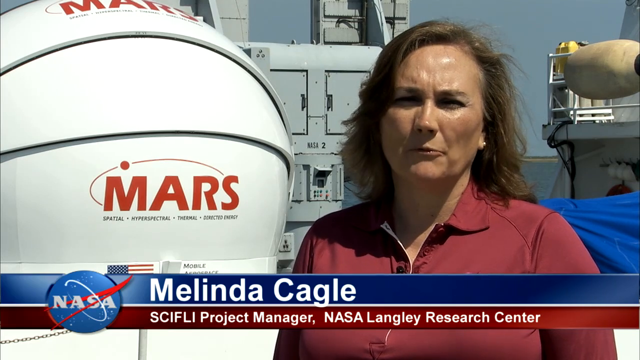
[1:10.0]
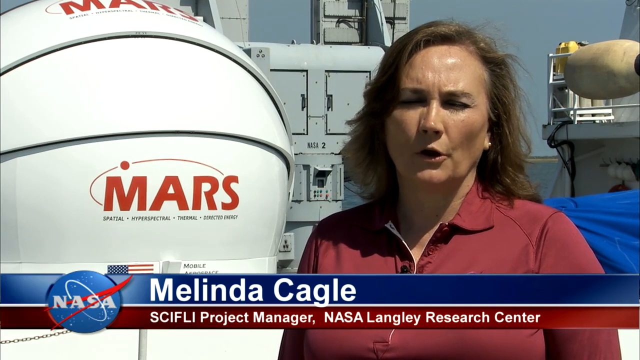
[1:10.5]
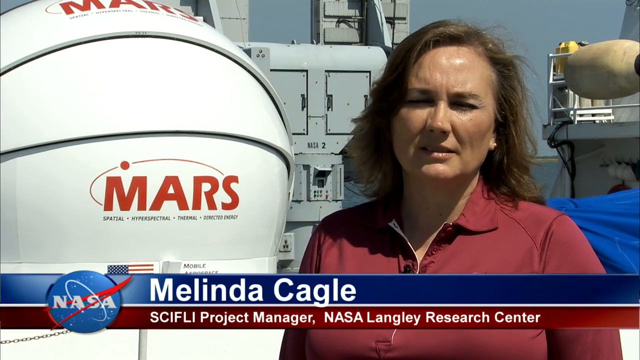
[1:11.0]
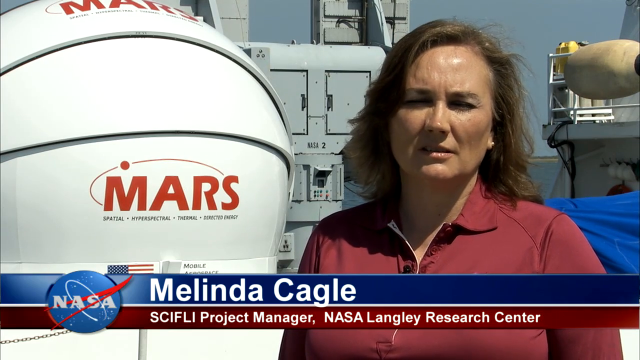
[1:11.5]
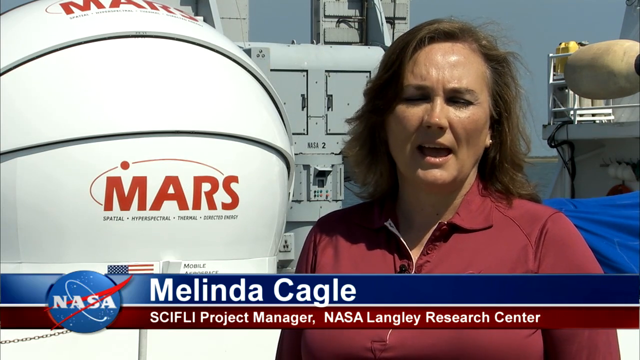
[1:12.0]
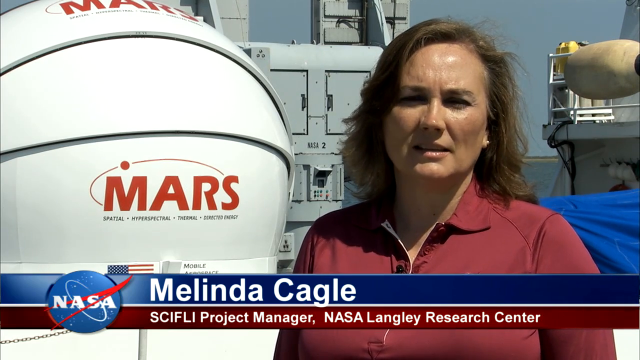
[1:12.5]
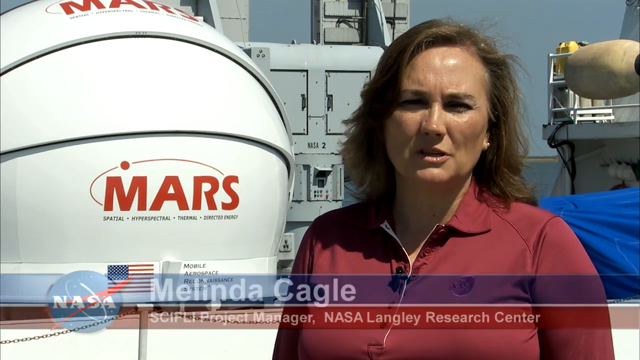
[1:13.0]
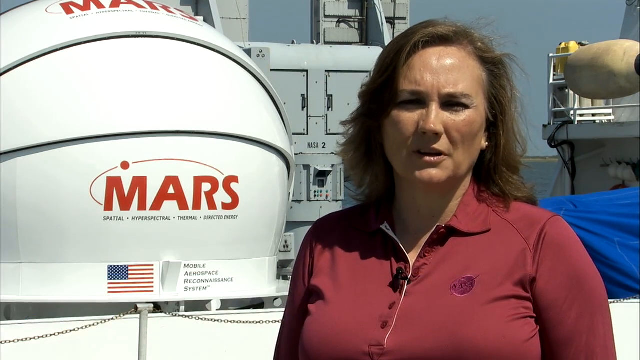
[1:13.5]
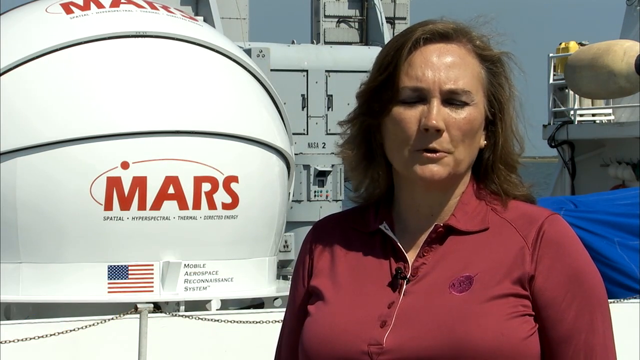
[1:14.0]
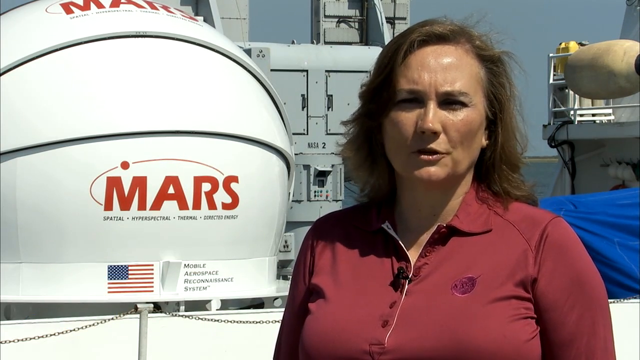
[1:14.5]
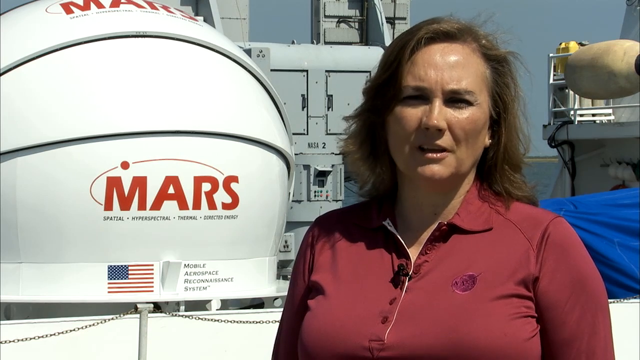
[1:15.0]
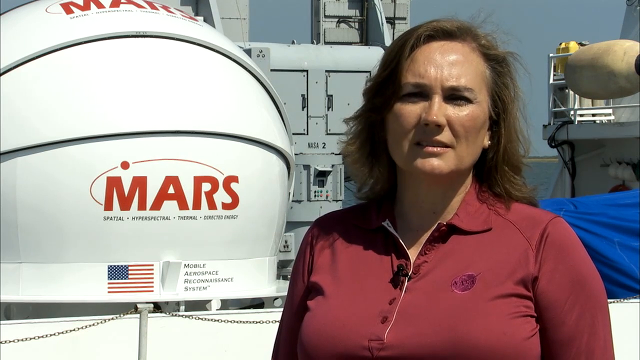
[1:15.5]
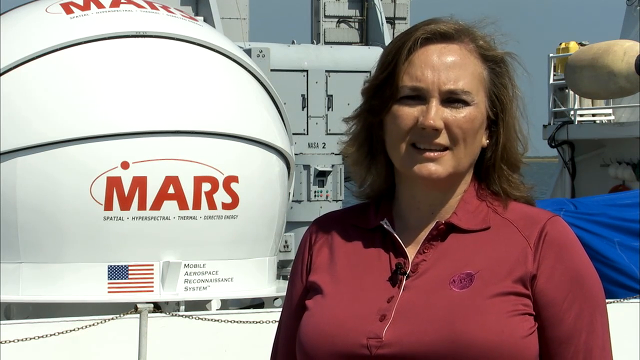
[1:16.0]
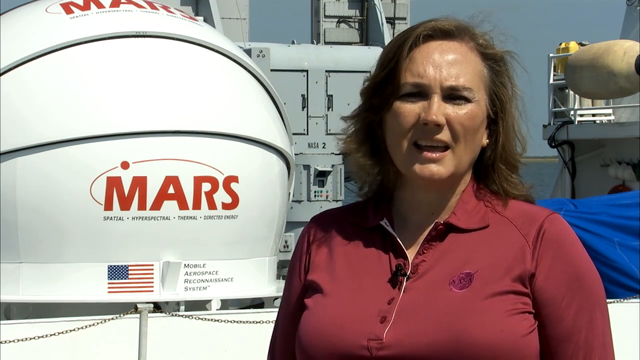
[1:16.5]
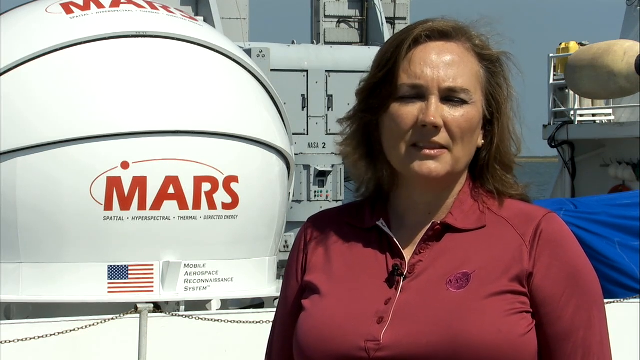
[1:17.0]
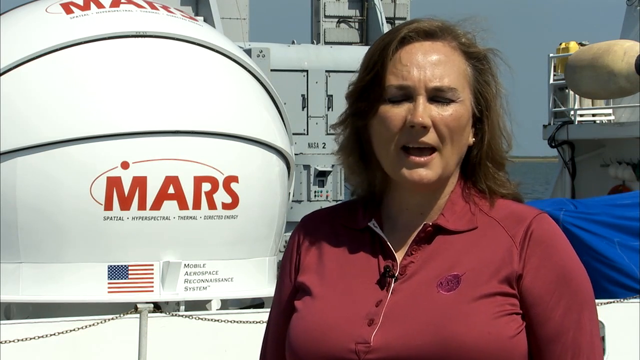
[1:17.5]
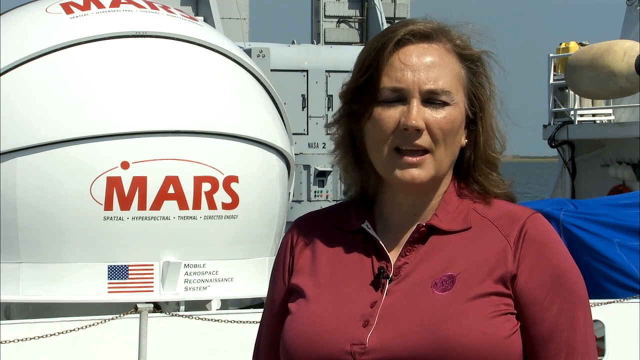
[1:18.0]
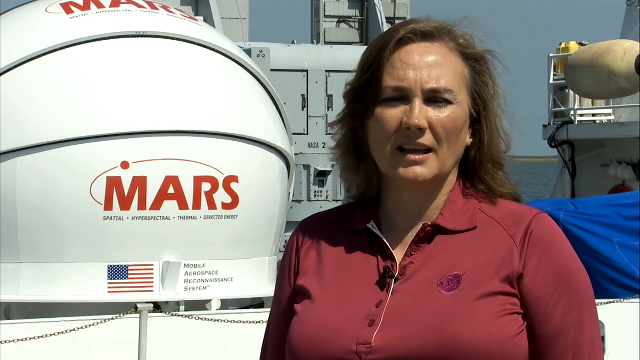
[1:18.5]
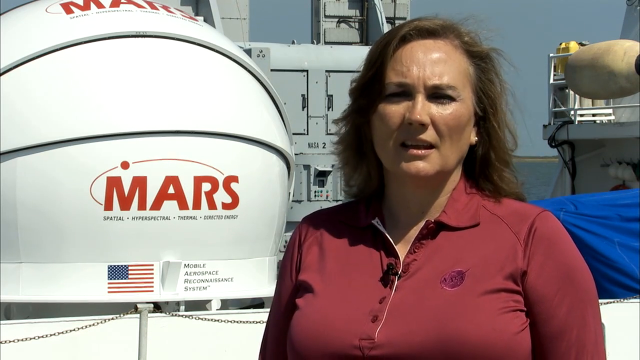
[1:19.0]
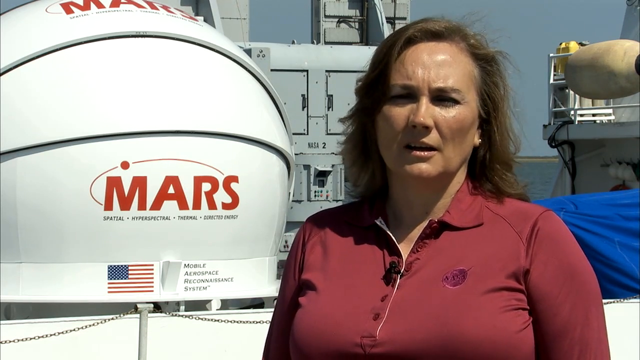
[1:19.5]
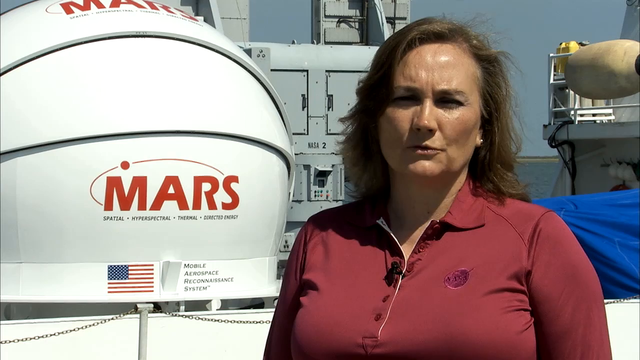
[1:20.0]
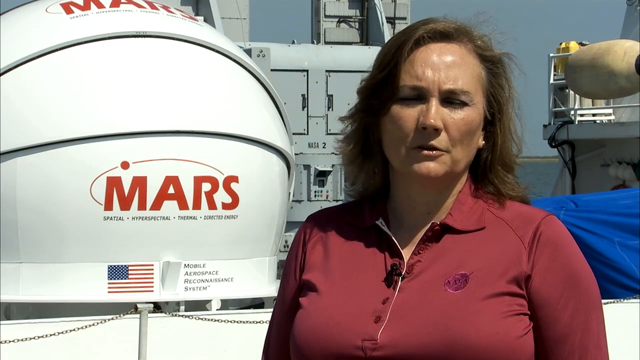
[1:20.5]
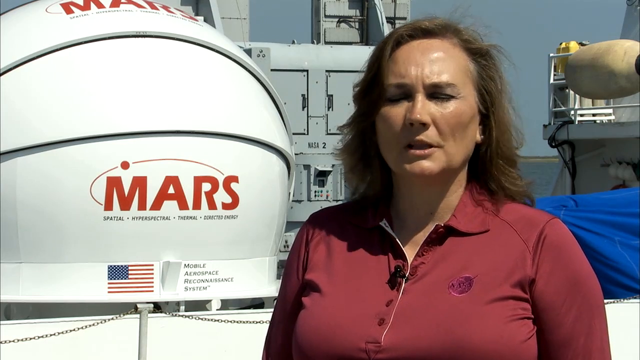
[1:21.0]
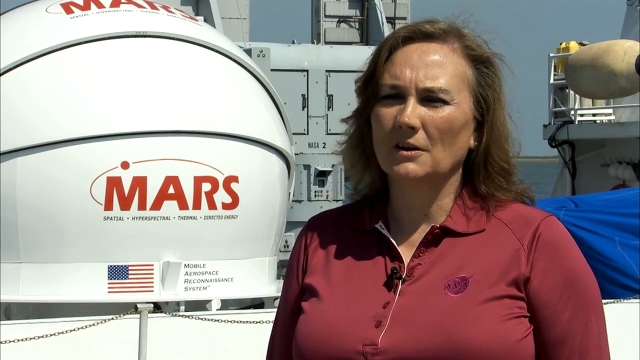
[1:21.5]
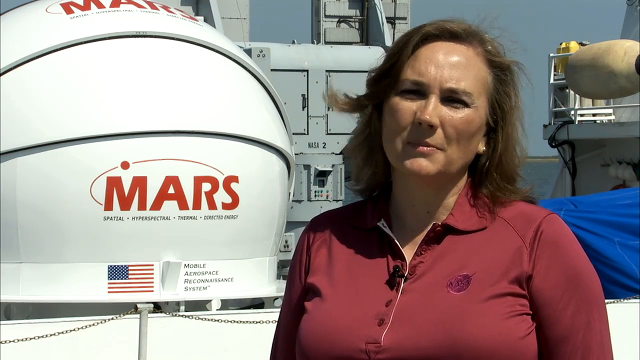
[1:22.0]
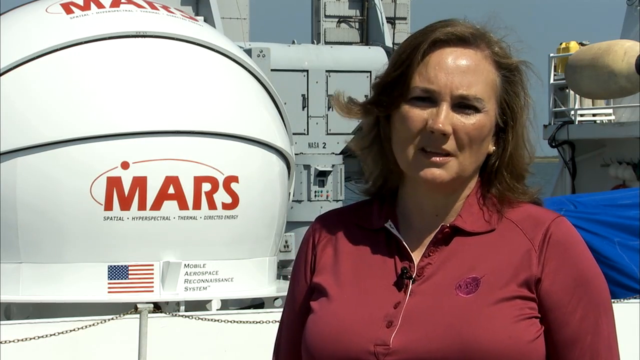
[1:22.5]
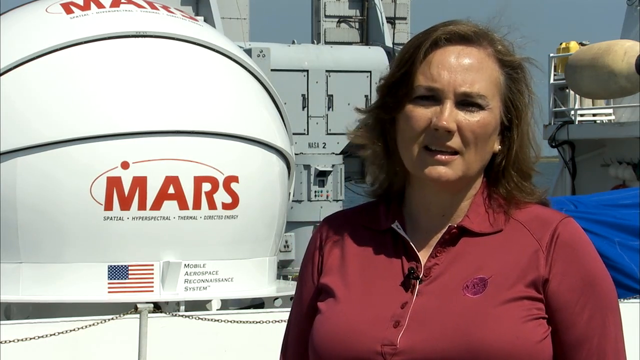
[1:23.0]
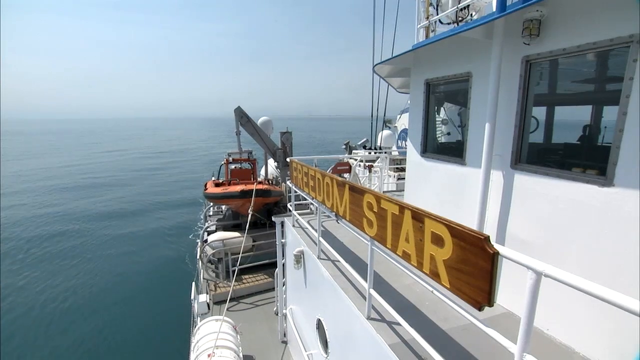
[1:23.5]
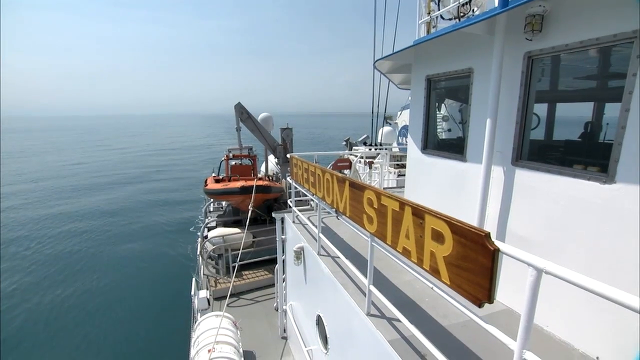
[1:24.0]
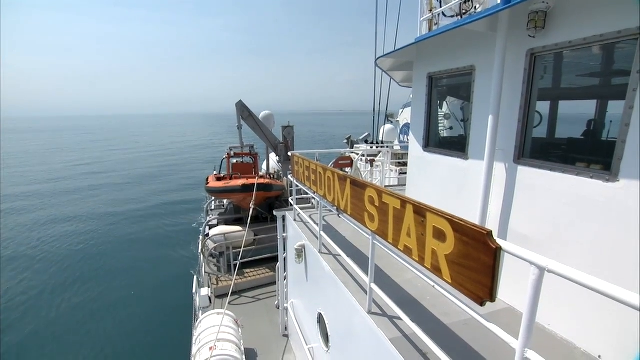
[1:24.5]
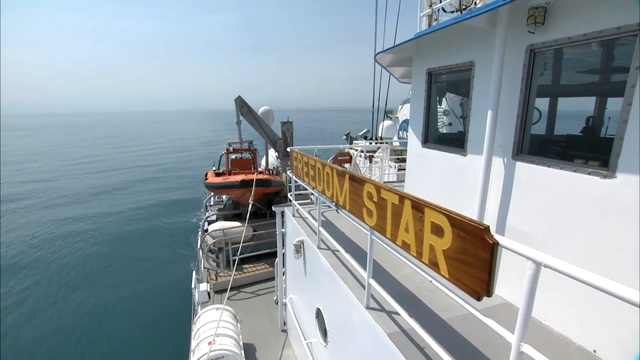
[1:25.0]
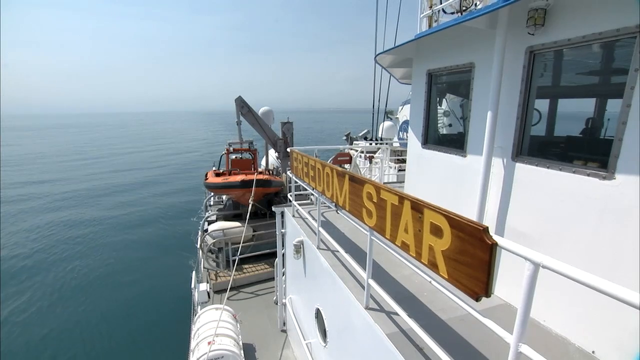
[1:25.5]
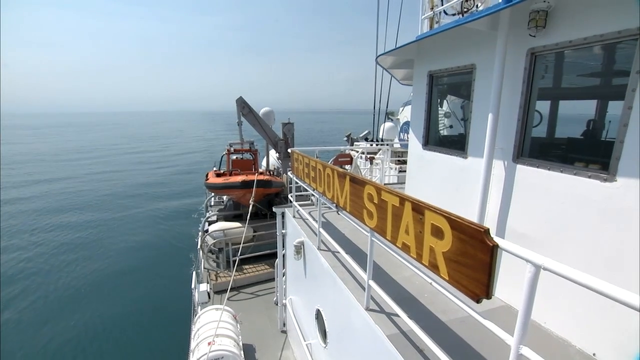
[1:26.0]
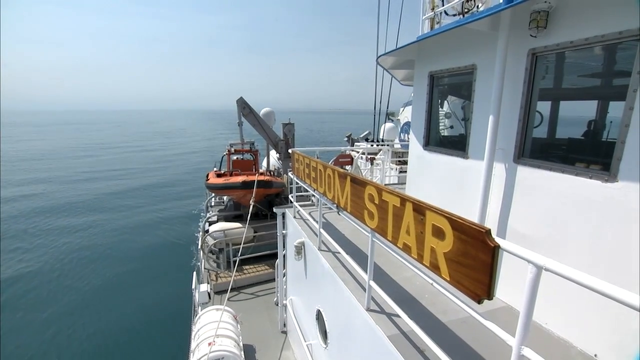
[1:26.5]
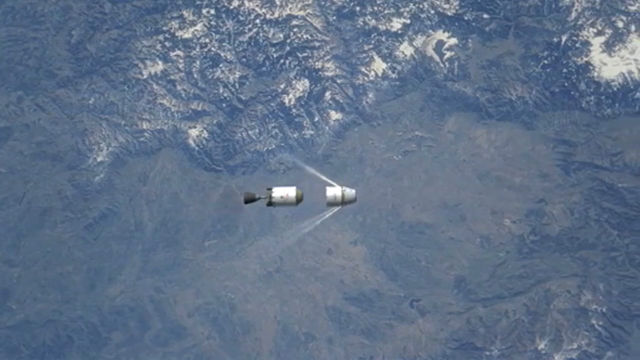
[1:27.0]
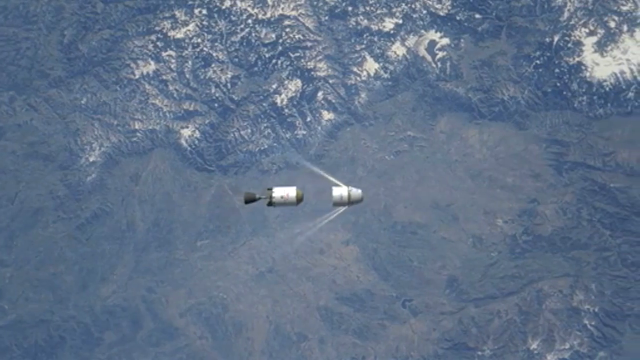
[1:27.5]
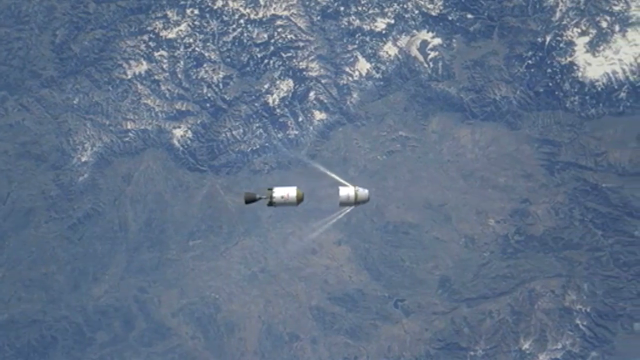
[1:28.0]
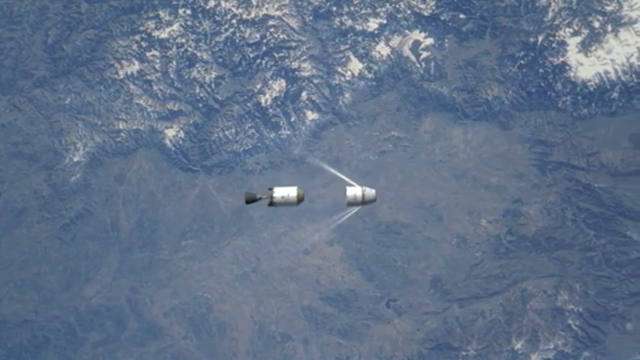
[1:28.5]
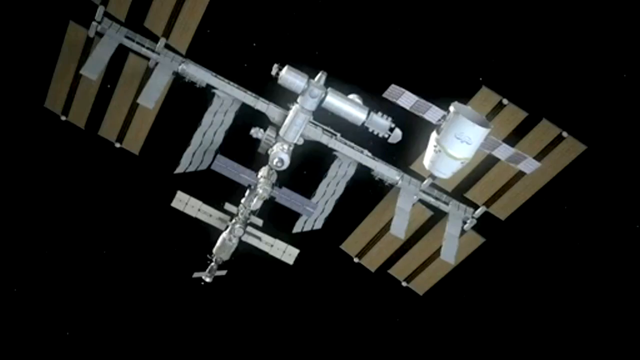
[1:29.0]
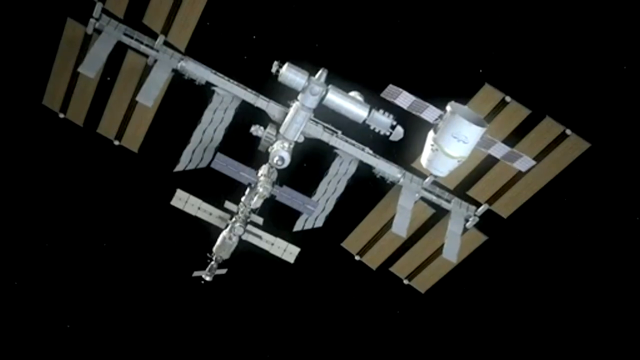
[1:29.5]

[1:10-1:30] A woman is talking. A blue banner at the bottom reads "Melinda Cagle" in white text, and beneath it a red banner reads "SCI FLI project manager, NASA Langley Research Center", with the same NASA logo to the left. She wears a red collared shirt unbuttoned at the front, and she seems to have an embroidered logo the same color as her shirt on the right side. Her shoulder-length, medium-brown hair is parted on the side and blowing in the wind; she is Caucasian and looks at the camera while talking. The bottom banners with all the text then go away. Next, the side of the boat appears: "Freedom Star" in yellow all-caps letters on kind of a wood plank, apparently carved in, on the railing of the white boat. The view is from the side as if standing on the boat looking ahead, with the ocean and a gray sky, and the boat mostly on the right side of the frame. Briefly, a similar capsule, much shorter and stubbier, comes off a main part, seen from an aerial view with mountains and topography below. Then a new graphic begins.